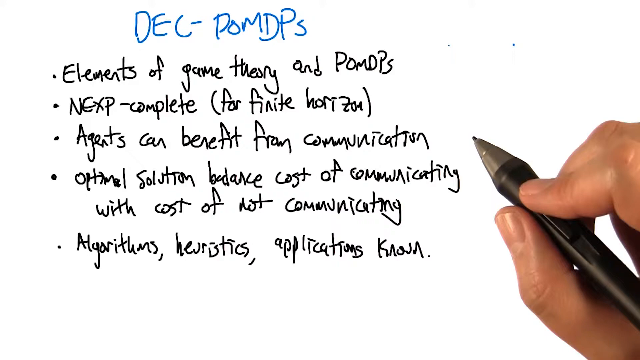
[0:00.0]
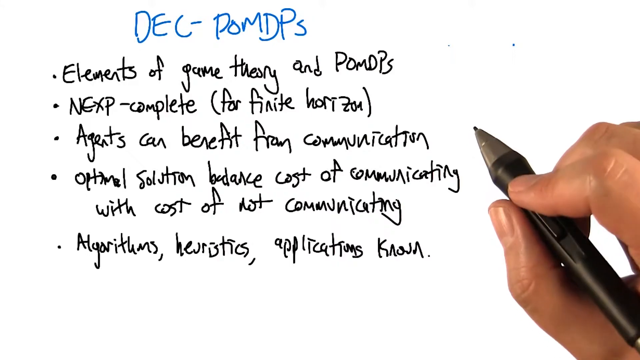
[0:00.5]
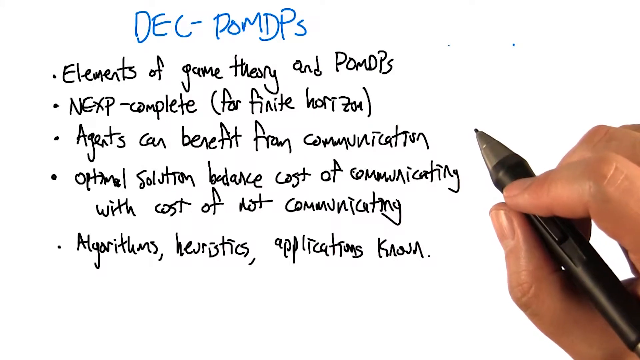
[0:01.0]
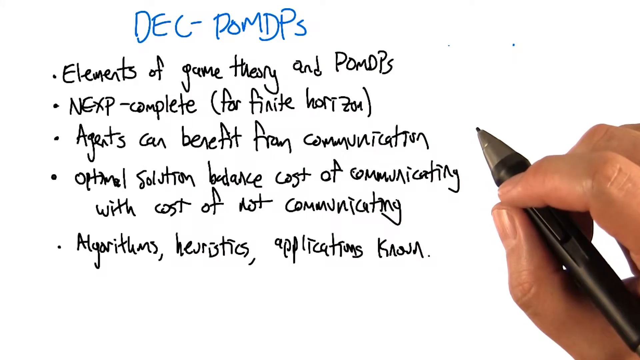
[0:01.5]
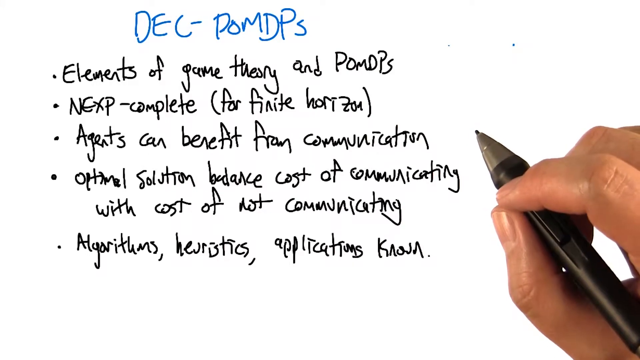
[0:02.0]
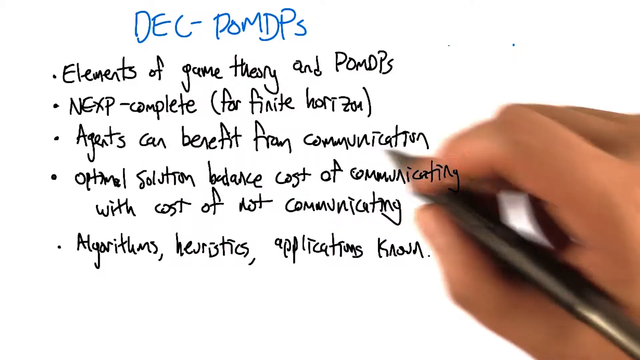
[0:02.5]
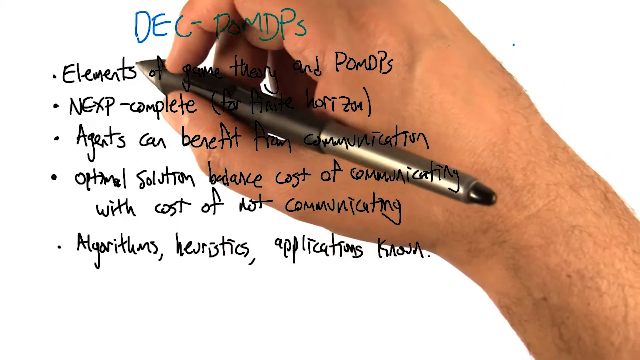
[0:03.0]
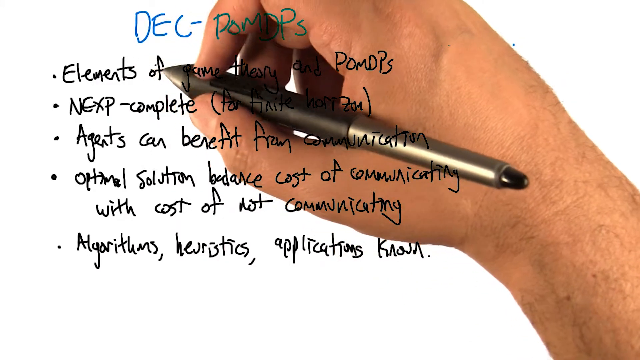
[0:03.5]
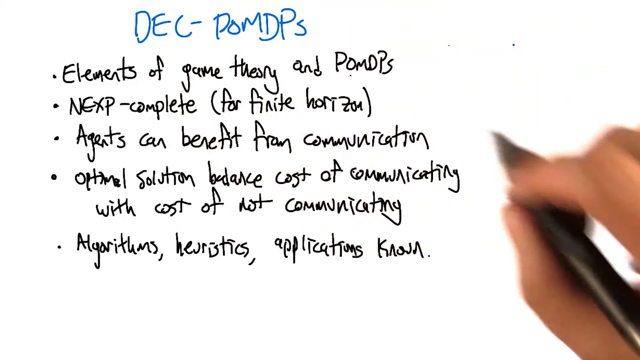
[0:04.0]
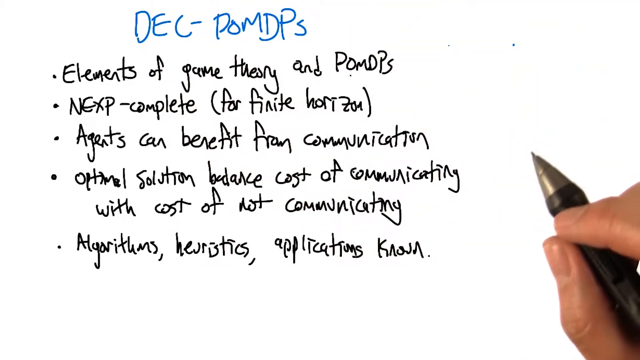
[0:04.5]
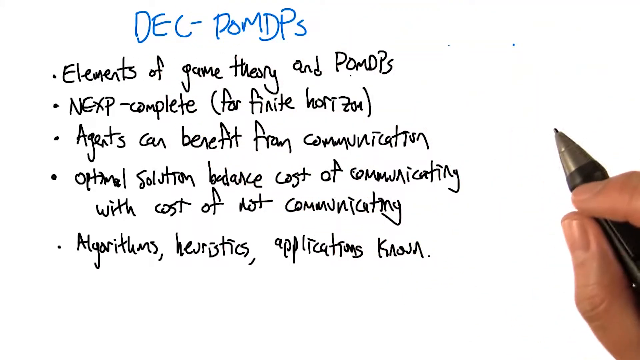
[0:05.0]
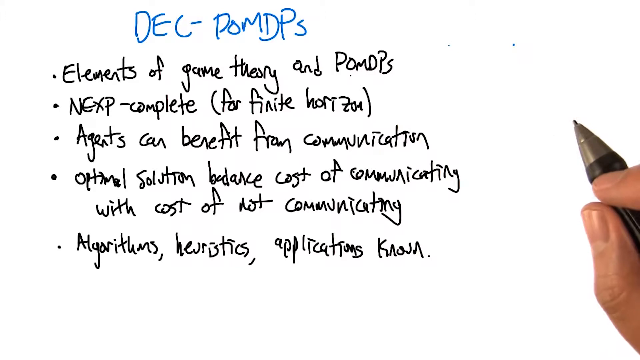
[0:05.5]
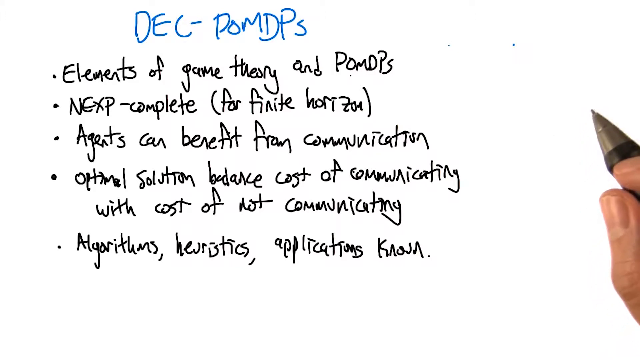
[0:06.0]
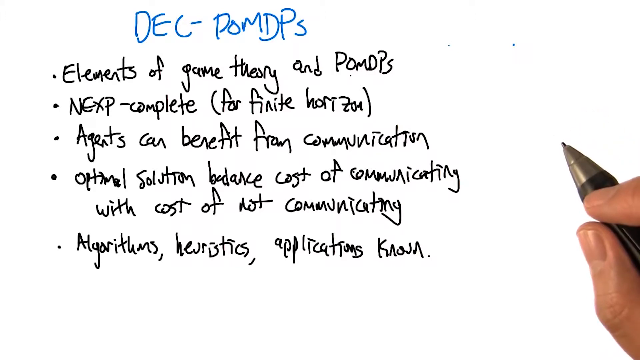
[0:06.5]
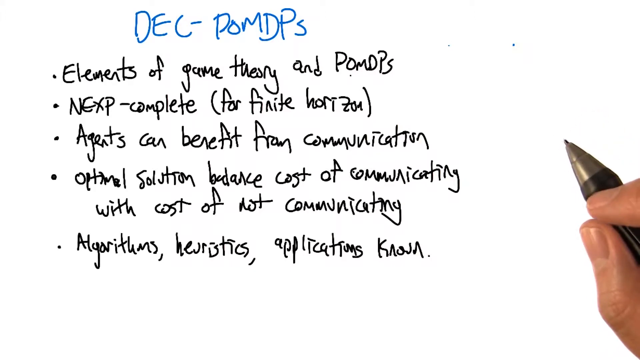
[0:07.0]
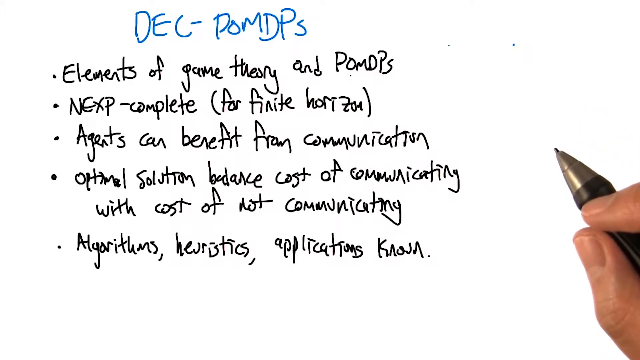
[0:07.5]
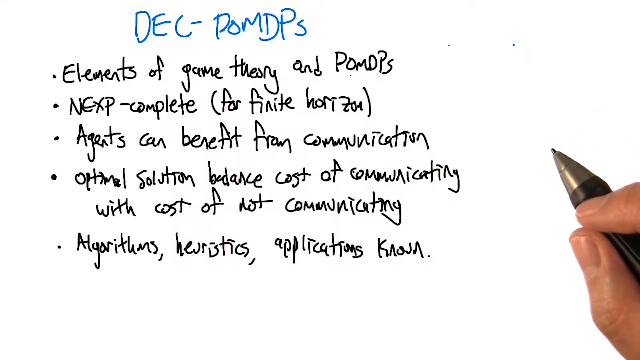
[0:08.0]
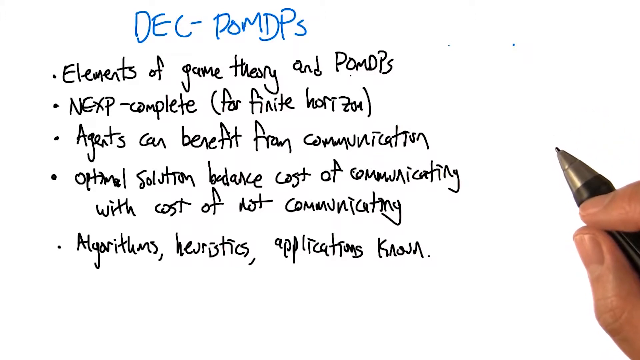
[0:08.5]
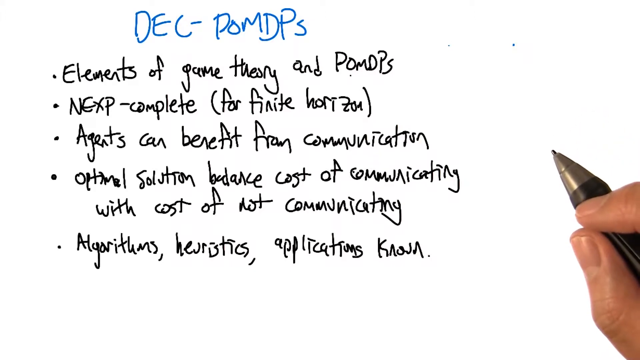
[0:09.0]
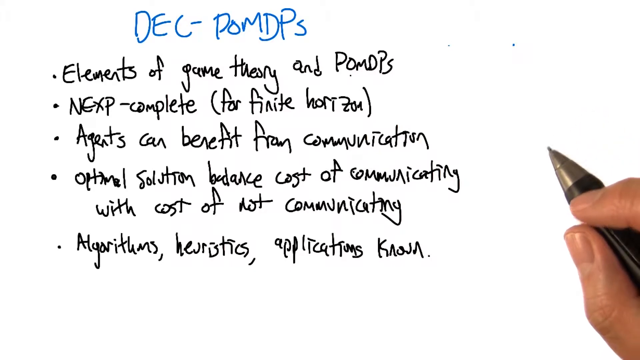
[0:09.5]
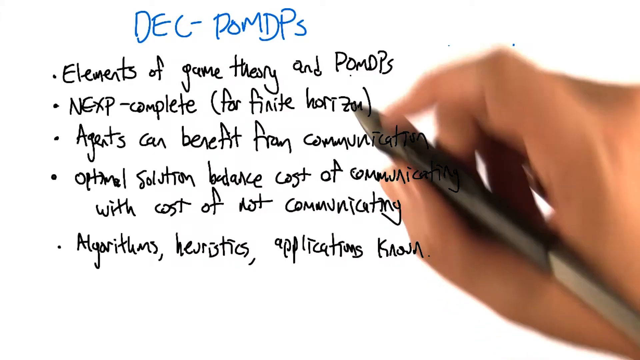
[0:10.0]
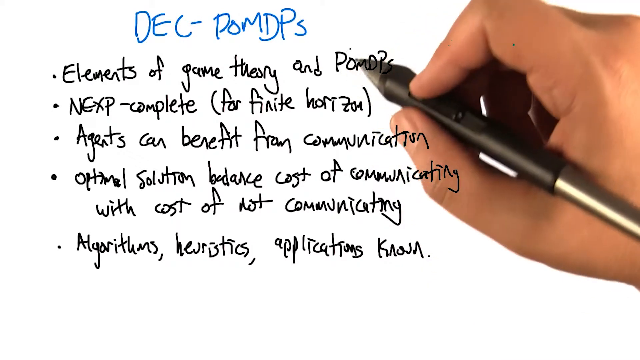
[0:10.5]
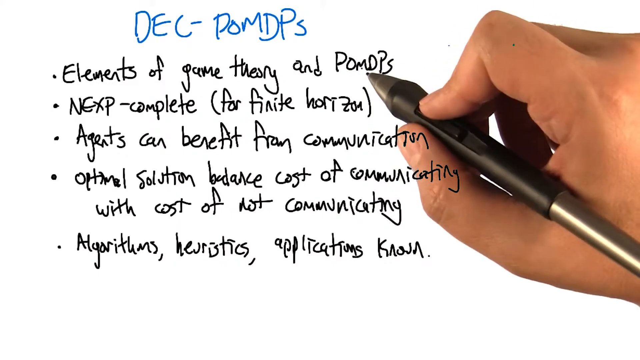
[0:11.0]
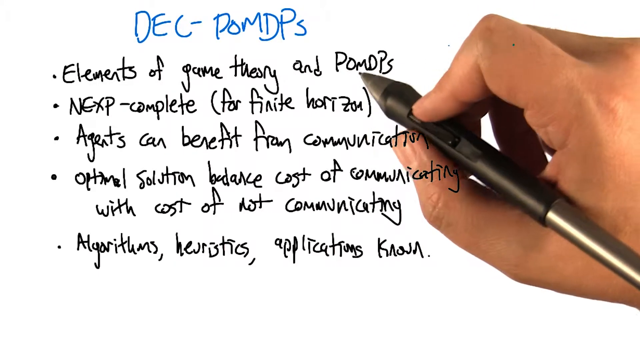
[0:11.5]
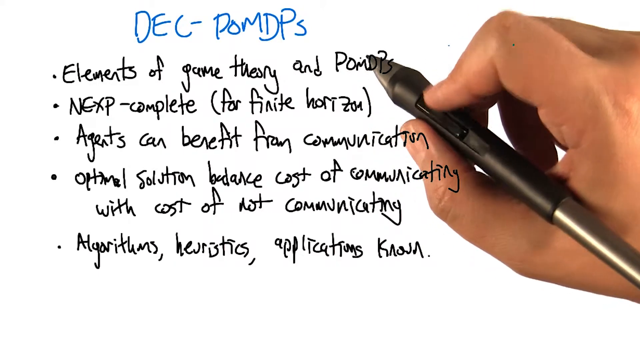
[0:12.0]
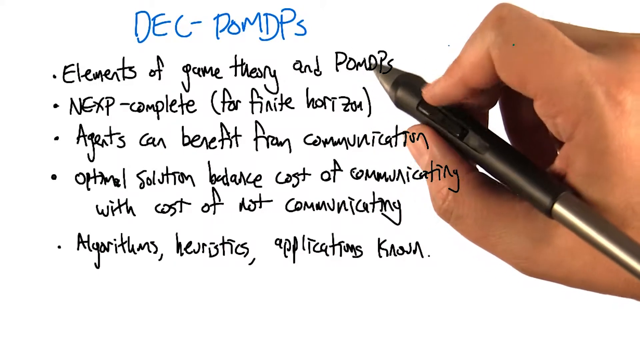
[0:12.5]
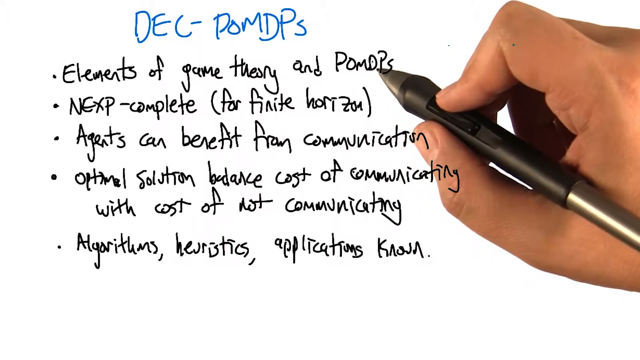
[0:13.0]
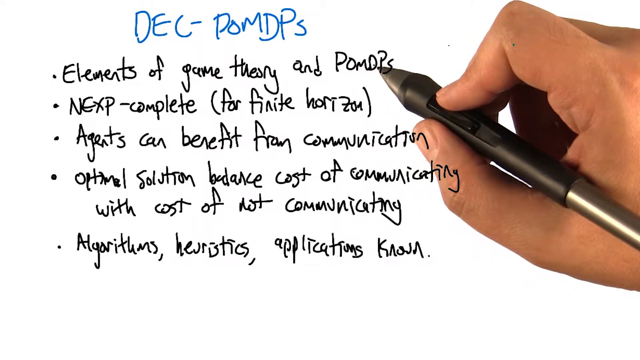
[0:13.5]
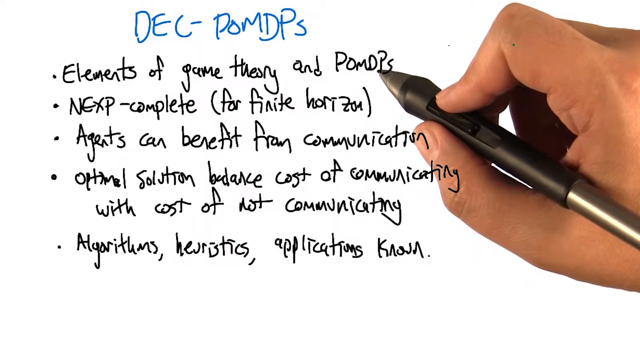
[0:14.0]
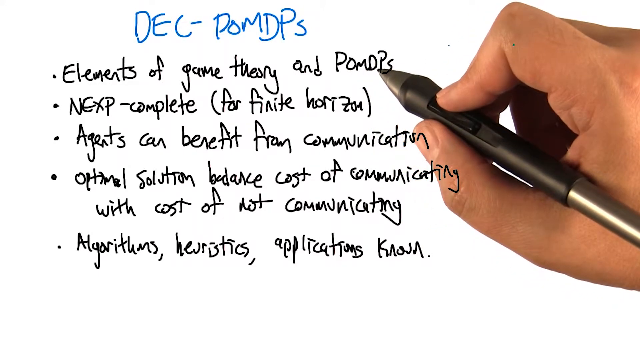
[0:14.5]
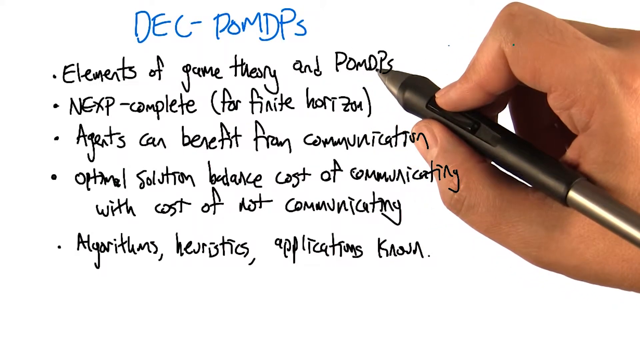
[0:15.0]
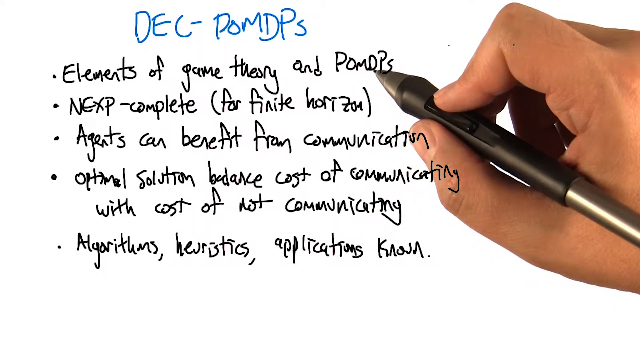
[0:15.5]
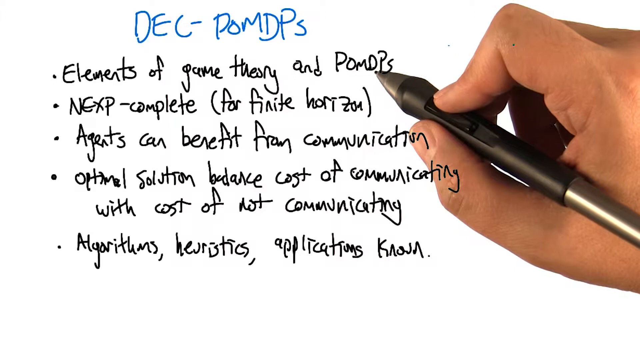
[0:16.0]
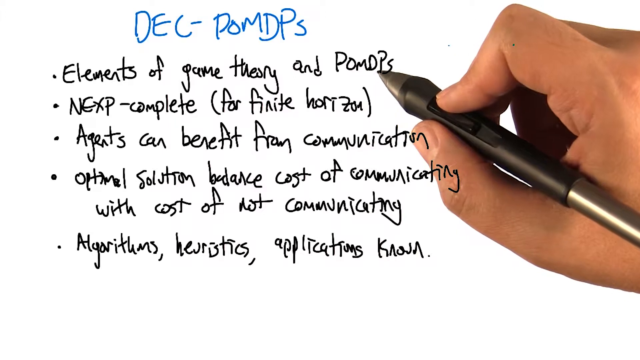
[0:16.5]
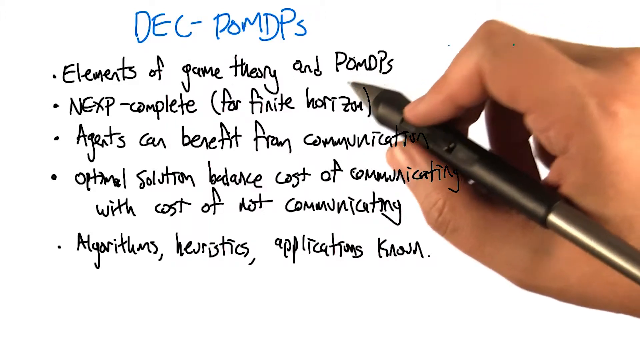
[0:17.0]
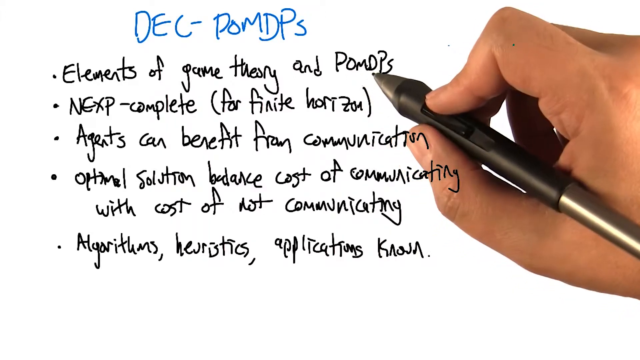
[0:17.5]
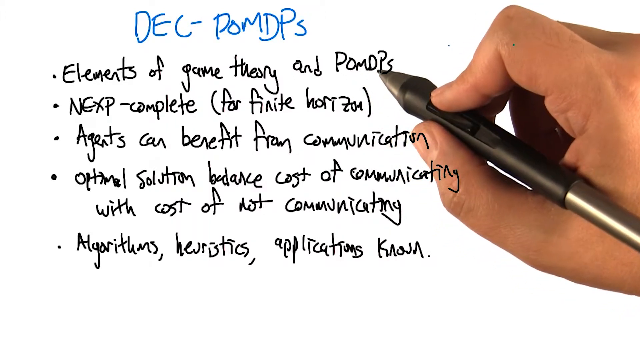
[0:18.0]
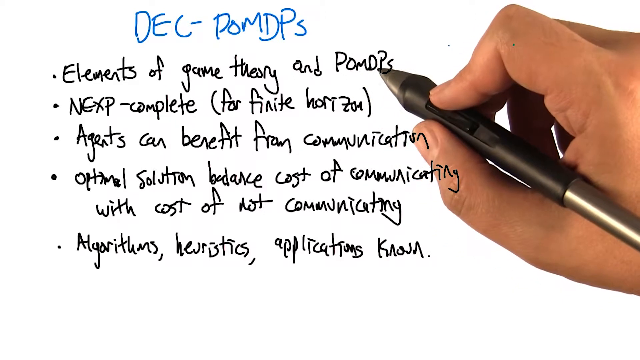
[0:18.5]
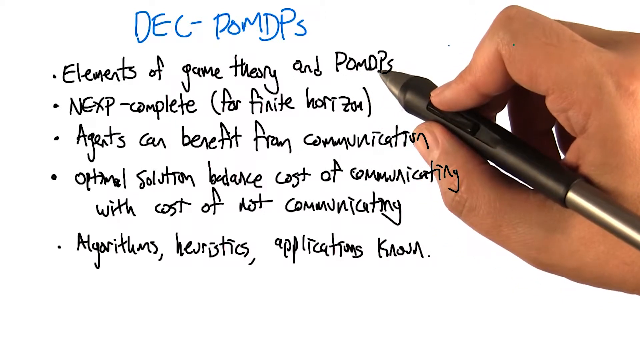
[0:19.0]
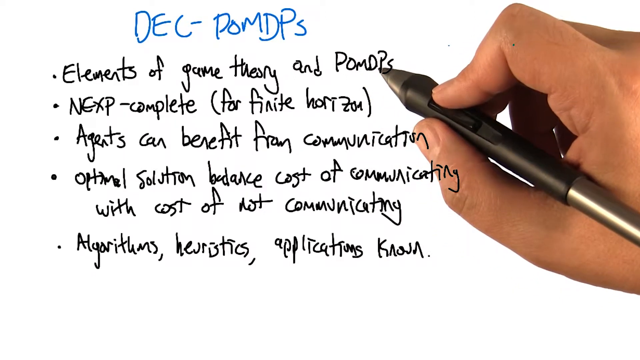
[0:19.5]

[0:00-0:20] Handwritten text on white paper includes the lines "Elements of game theory and POMDPS", "Next, complete or finite horizon", "Agents can benefit from communication", a line beginning "Optimal solutions balance cost of", and a line beginning "Algorithms". The handwriting is messy and not easy to make out. It is written in black pen, with the subheading written in blue. A person points his pen most often at "POMDPS" and under "DEC".